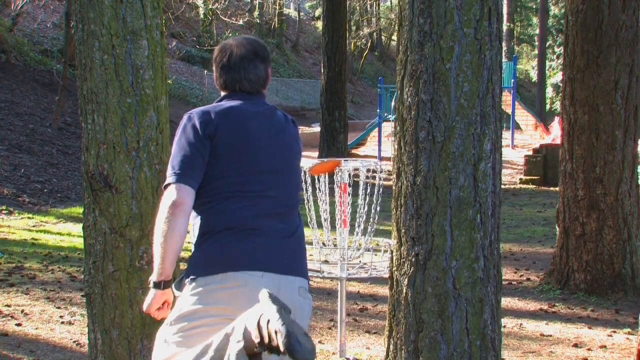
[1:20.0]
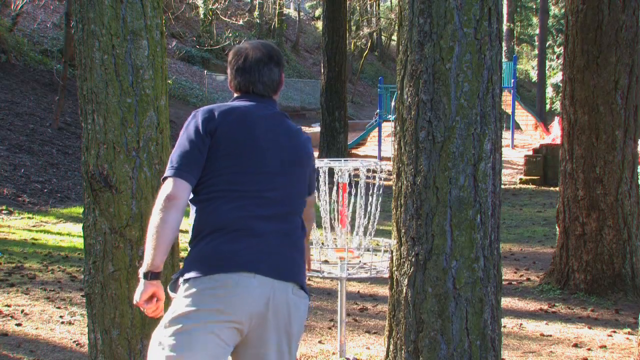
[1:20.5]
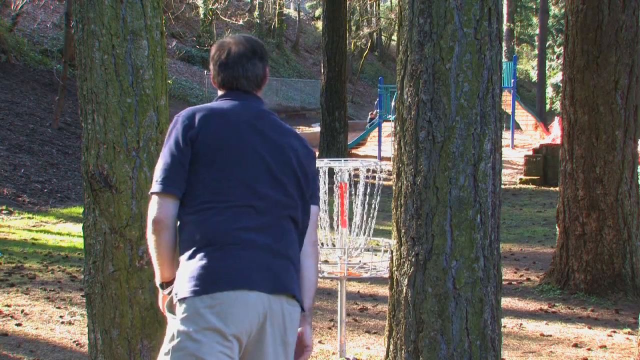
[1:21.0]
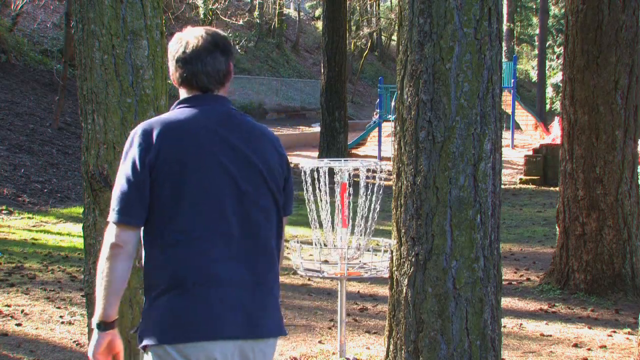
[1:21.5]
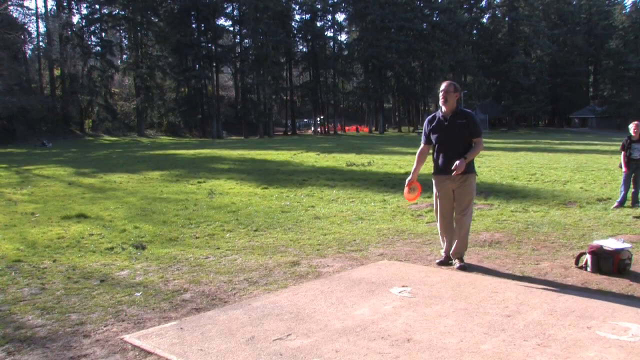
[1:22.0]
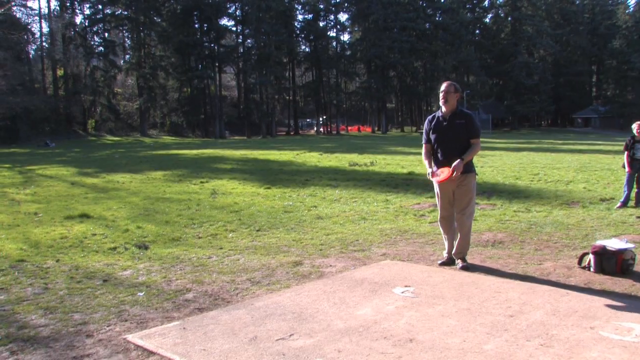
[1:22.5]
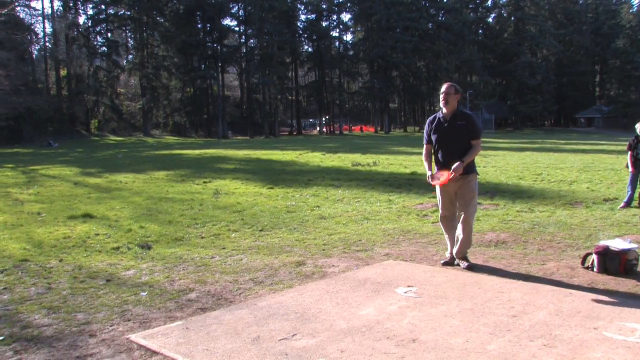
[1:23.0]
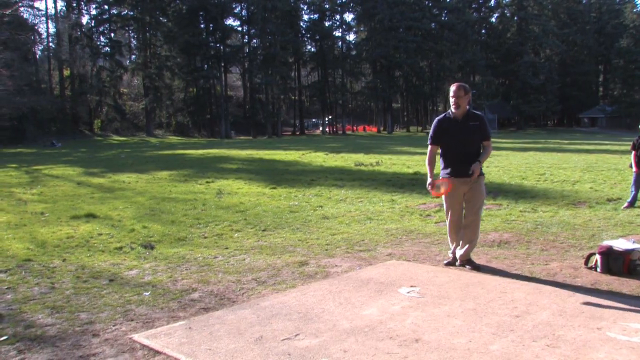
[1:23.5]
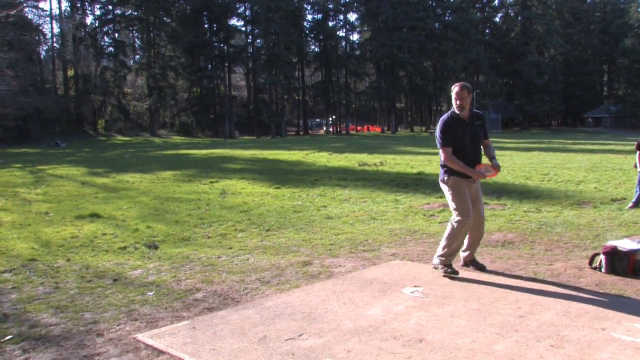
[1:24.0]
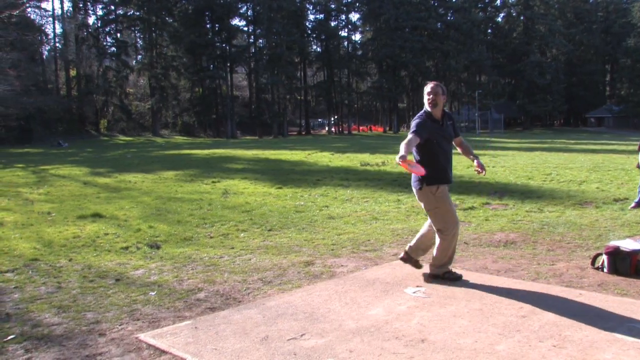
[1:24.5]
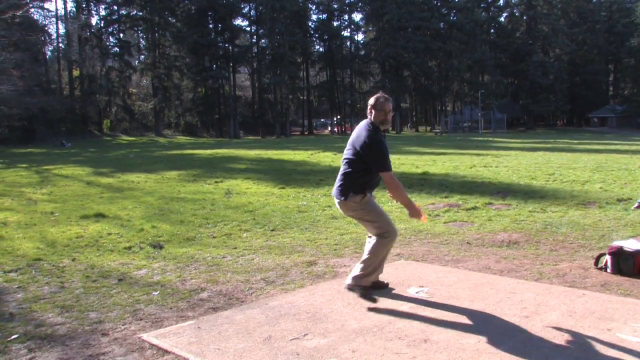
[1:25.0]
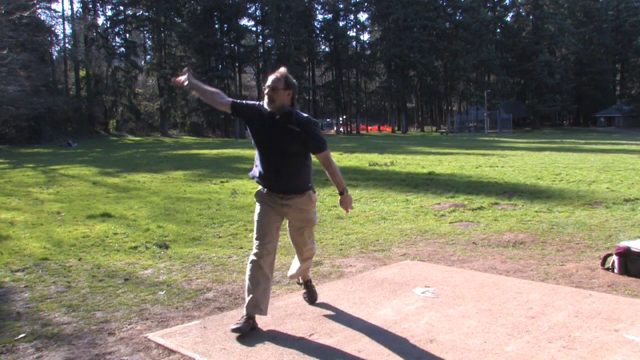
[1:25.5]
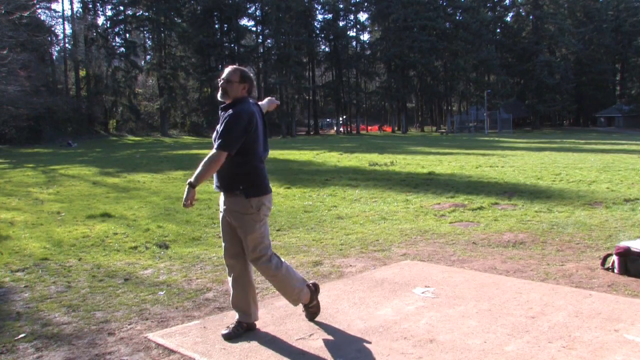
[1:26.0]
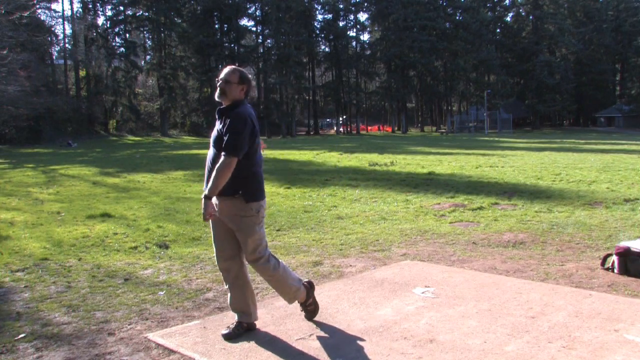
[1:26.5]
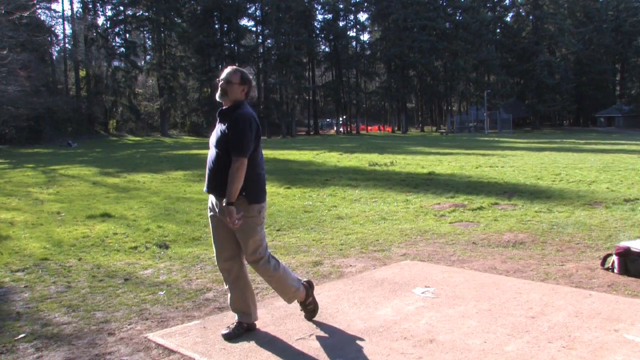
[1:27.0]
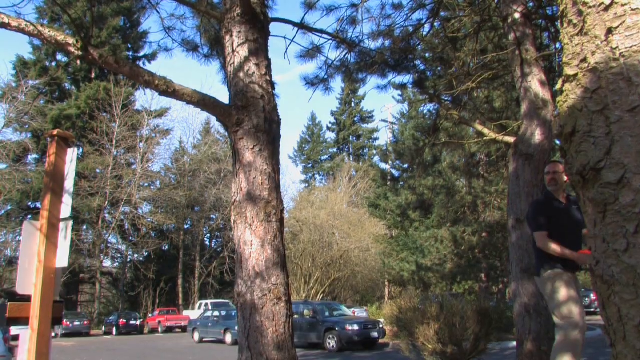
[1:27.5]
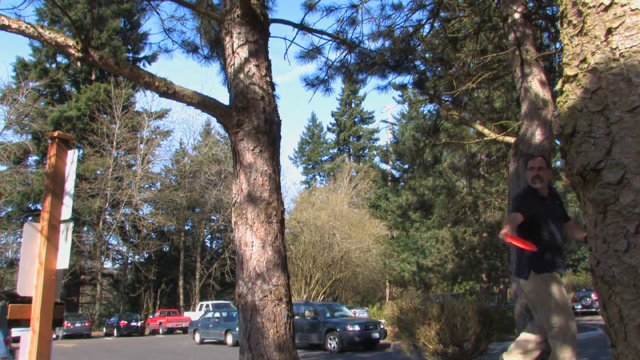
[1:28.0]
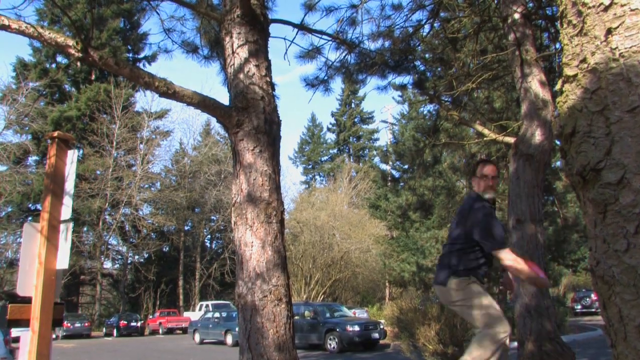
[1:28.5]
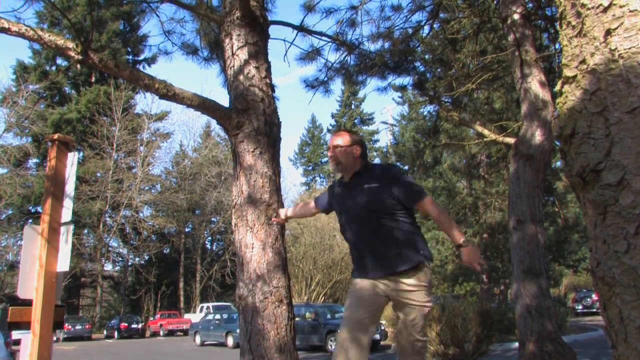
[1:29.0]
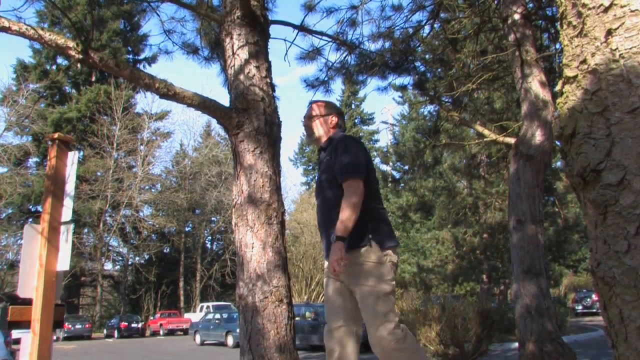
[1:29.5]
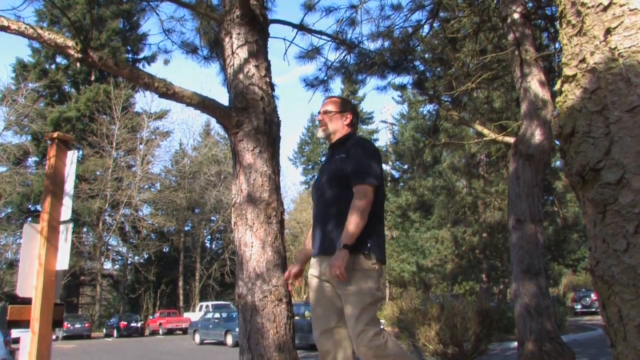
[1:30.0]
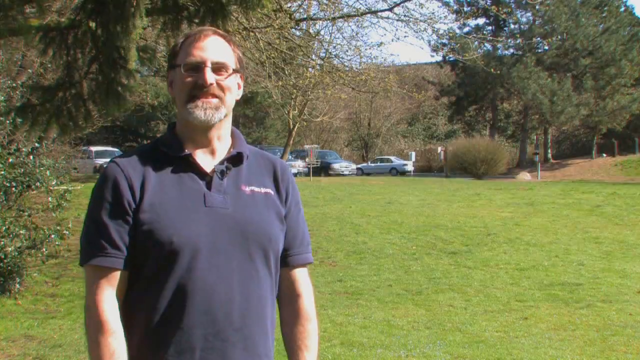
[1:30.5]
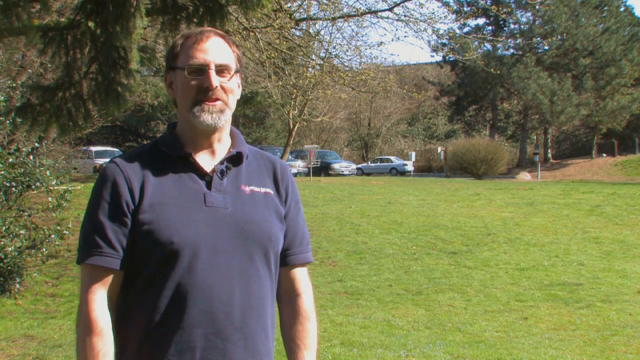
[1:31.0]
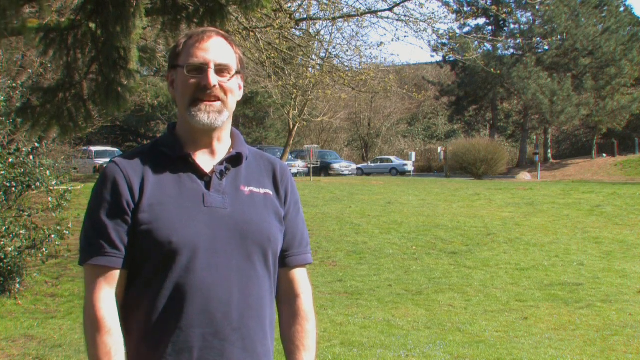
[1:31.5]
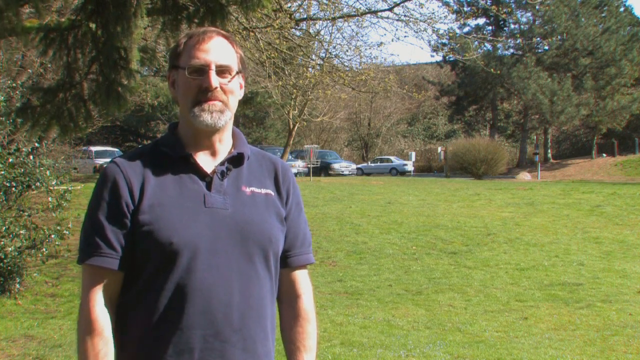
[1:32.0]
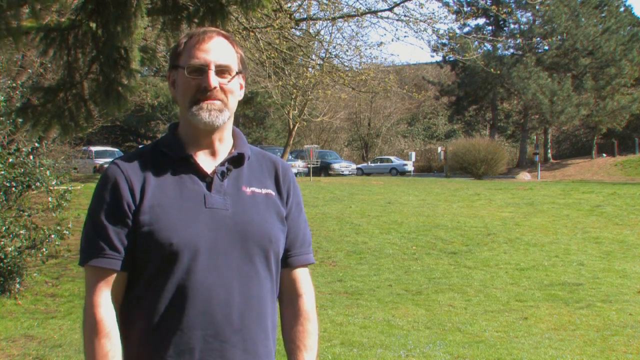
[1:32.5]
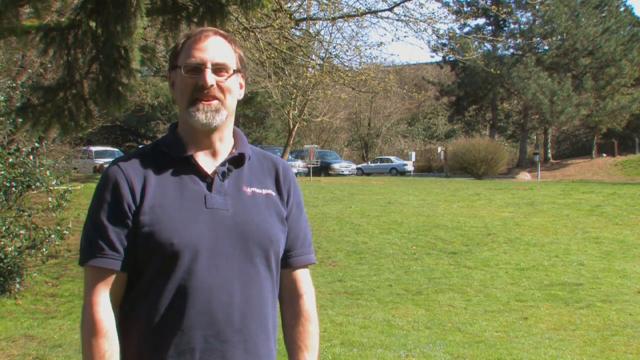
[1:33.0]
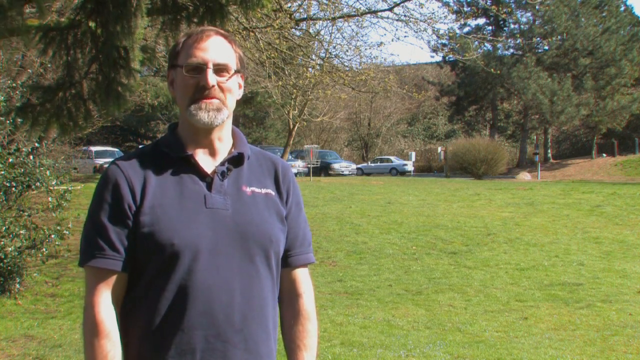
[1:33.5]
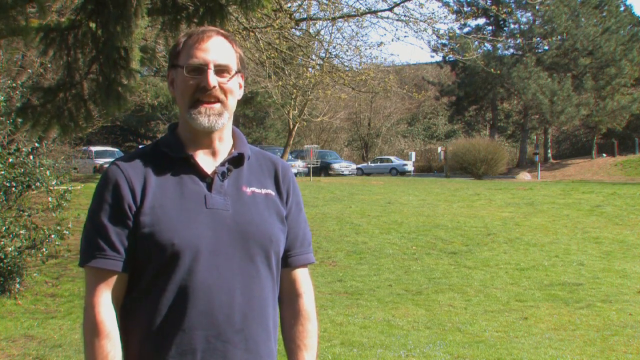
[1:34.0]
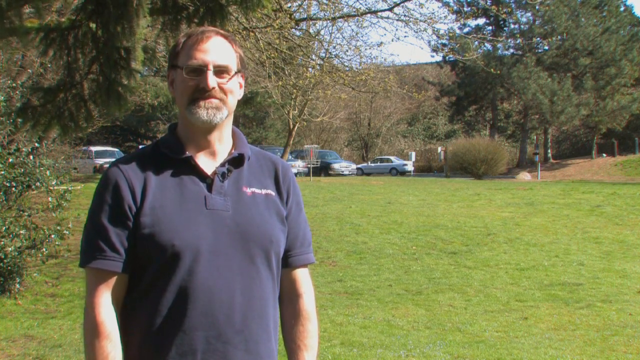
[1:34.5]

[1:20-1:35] The man again makes a goal into the frisbee chain game, using the orange frisbee again. In front of him is a concrete pad that he uses for the game. He then uses a different technique, taking more steps forward and putting much more force into the throw, throwing not into the chain but into the distance. The frisbee goes very far. Behind him, large pine trees are outlined against the blue sky. In the first frame there seems to be one person standing behind him, and many cars are in the parking lot. A different angle shows the parking lot and cars lined up along the side of the road. The cars look to be an older style, and based on them and people's clothing, the video is possibly a couple of decades old.